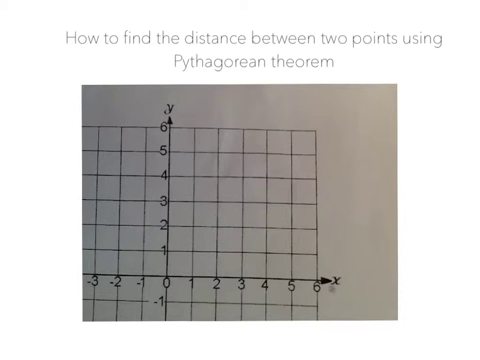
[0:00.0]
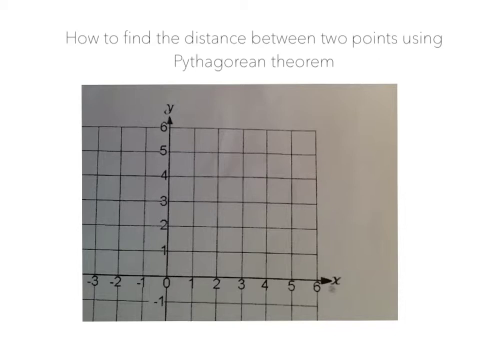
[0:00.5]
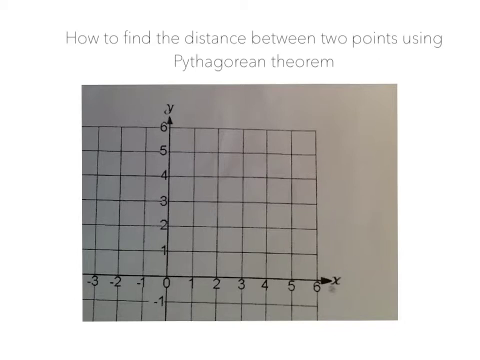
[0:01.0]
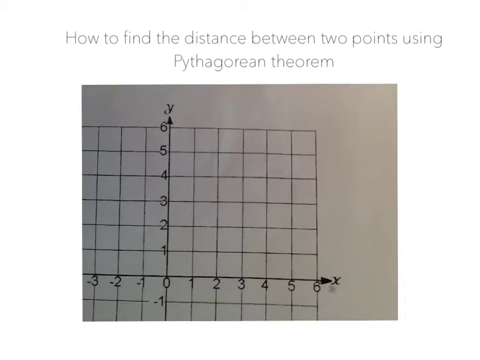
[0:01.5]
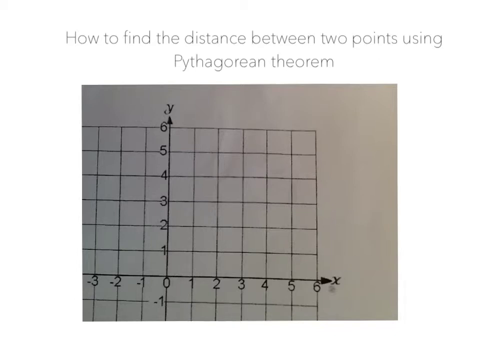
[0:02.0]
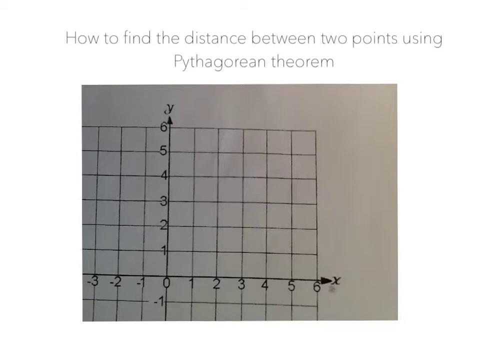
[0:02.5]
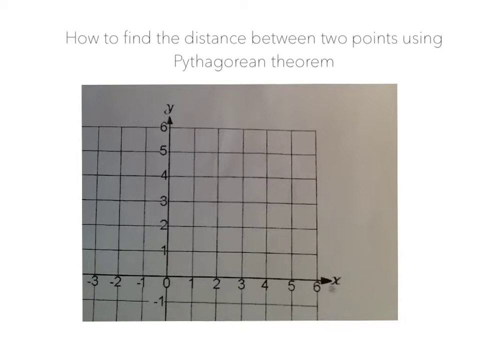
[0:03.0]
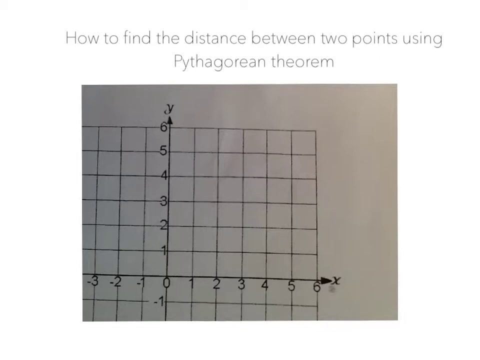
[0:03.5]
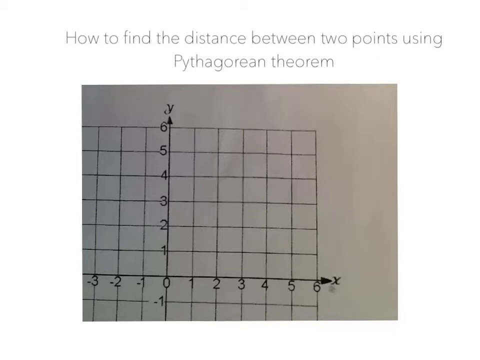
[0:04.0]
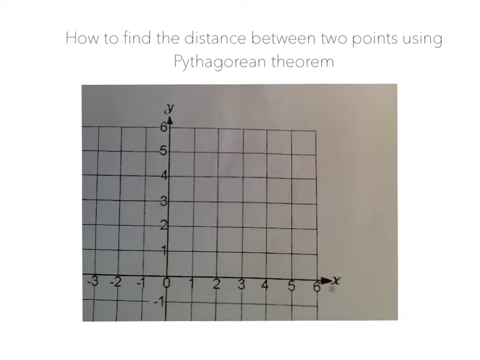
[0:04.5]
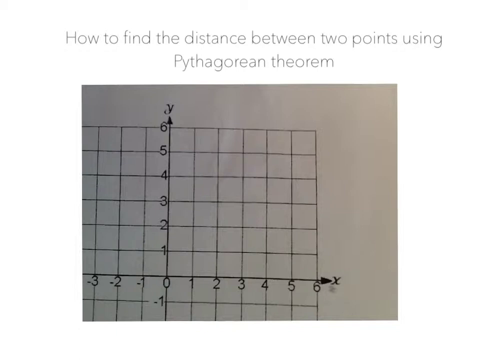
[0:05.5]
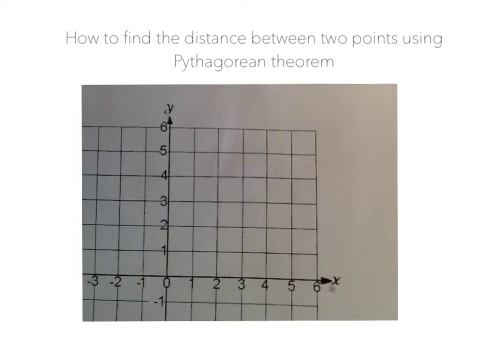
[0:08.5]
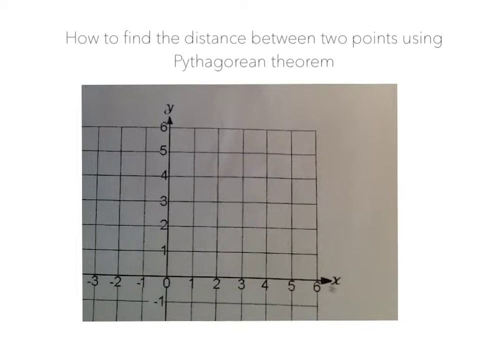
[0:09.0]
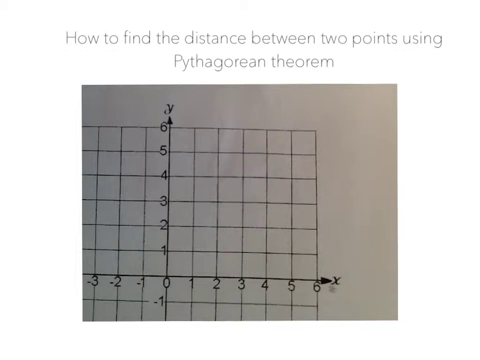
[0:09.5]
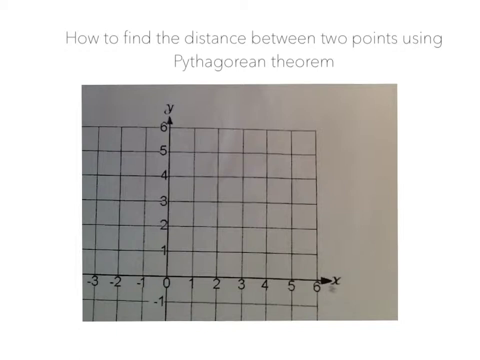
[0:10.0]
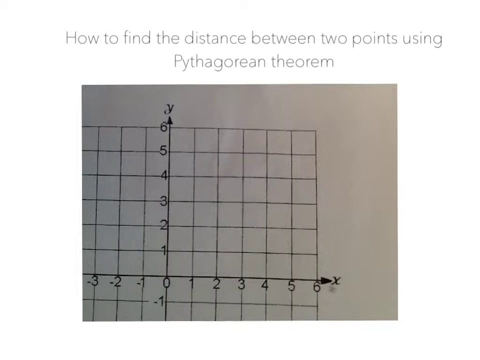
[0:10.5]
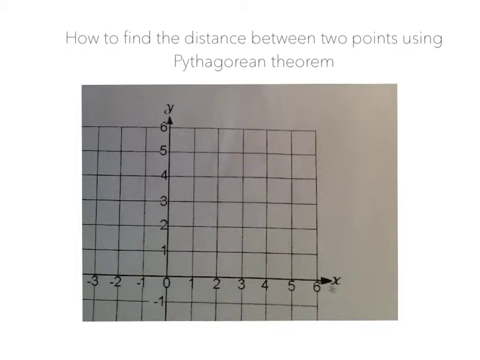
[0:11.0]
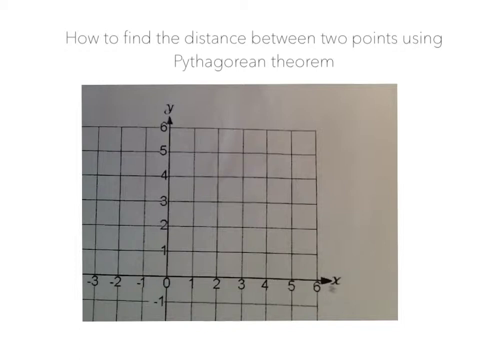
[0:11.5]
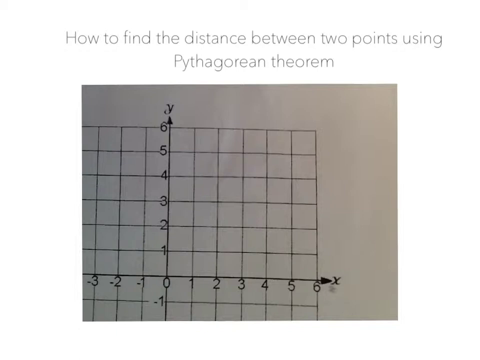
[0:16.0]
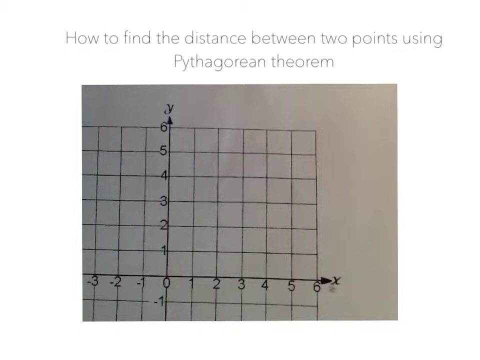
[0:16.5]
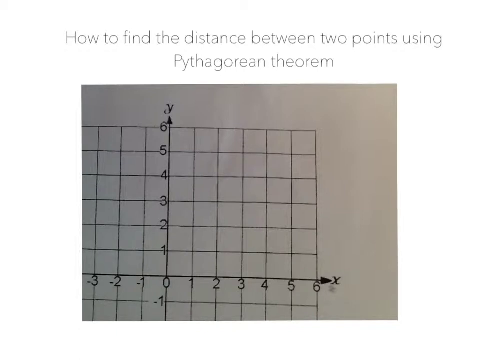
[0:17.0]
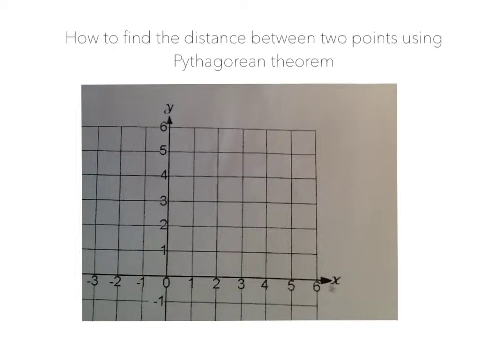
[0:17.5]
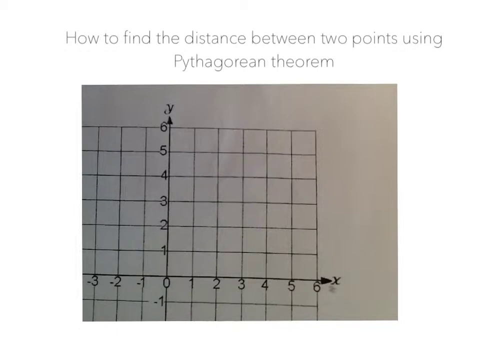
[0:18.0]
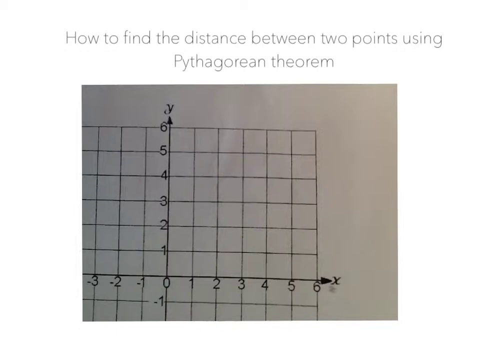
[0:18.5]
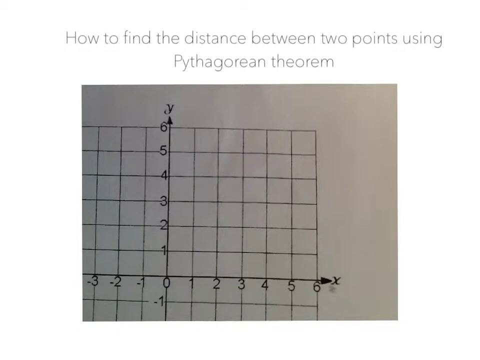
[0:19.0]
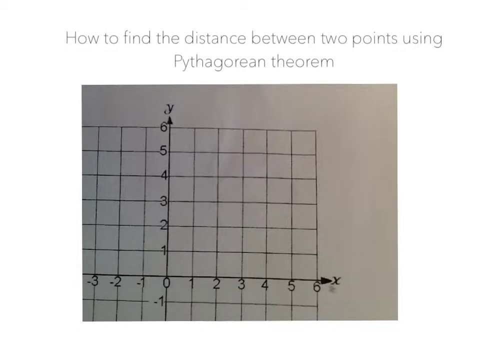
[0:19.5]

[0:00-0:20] A partial shot of a graph on a grid stays on the screen. The grid has ten columns, the first of which is partially obscured because it is cut off by the edge of the screen, and eight rows. An X and a Y axis are on the grid: the Y axis runs along the line separating the fourth and fifth columns, and the X axis runs along the line between the sixth and seventh rows. Numbers mark the line of each row and column. On the y-axis they go from 6 at the very top down to 0 where the axes intersect, with -1 and -2 below that. The x-axis starts at -3 on the left, goes to 0 at the intersection, and then proceeds from 1 to 6. Right above the graph are two lines of faded, almost very light gray text. The first line says "How to find the distance between two points using" and the second says "Pythagorean theorem".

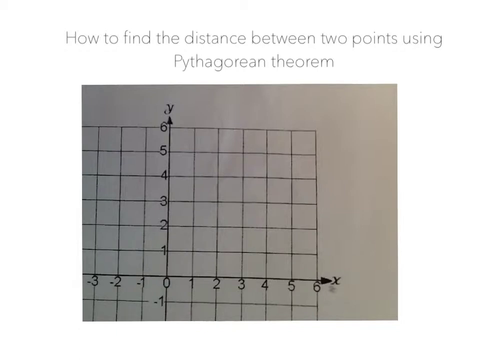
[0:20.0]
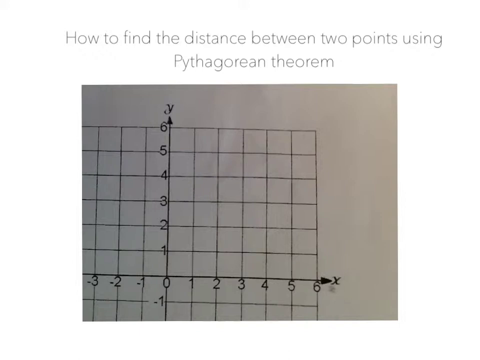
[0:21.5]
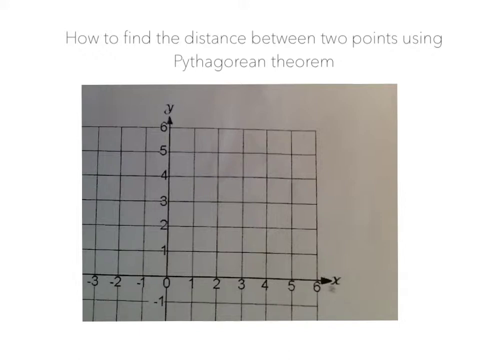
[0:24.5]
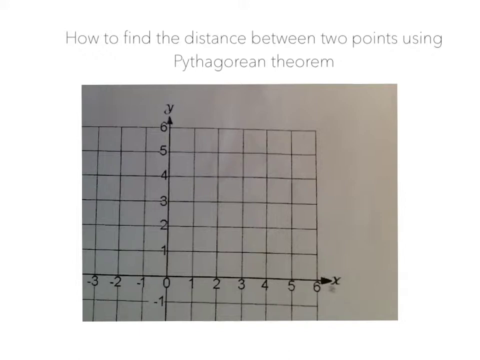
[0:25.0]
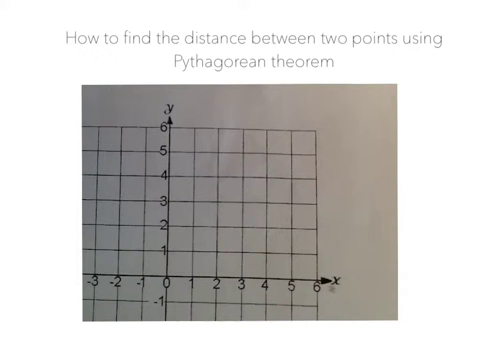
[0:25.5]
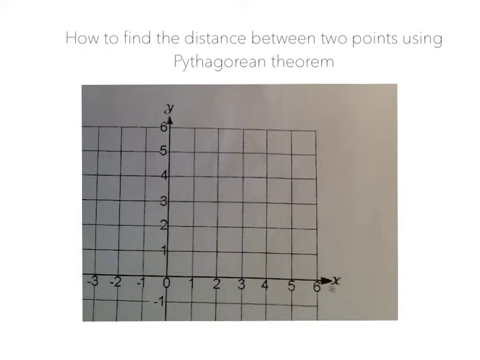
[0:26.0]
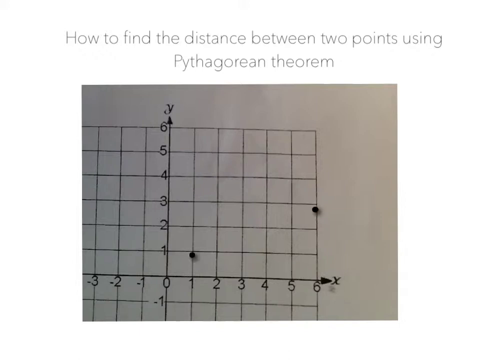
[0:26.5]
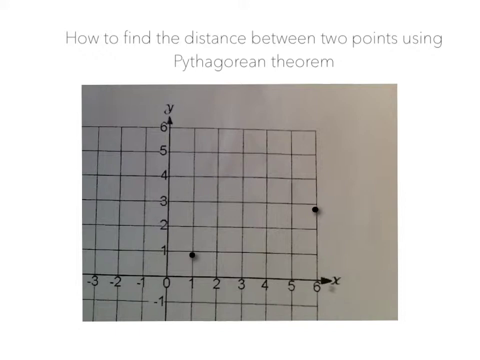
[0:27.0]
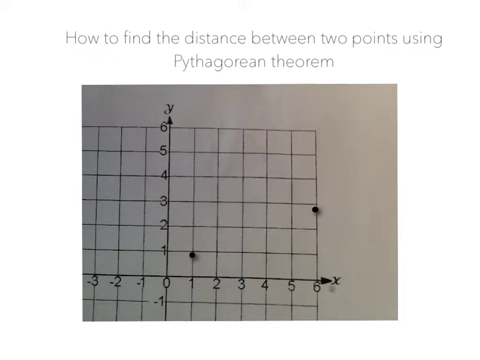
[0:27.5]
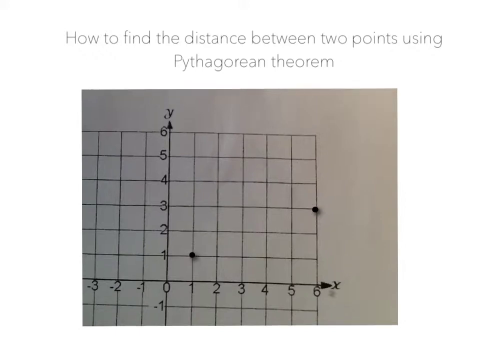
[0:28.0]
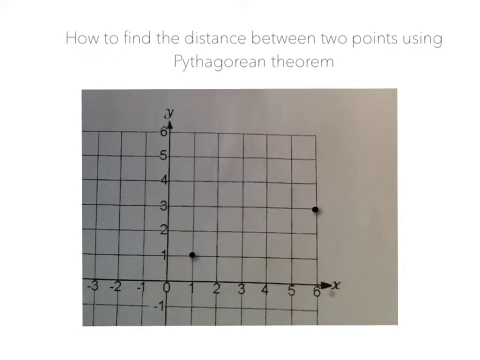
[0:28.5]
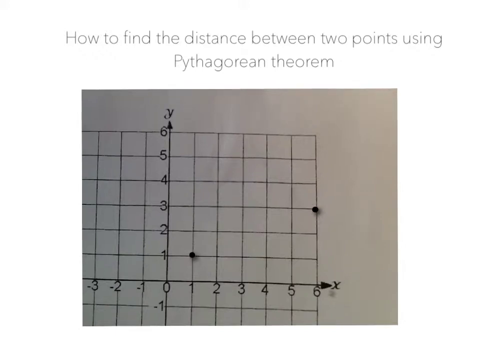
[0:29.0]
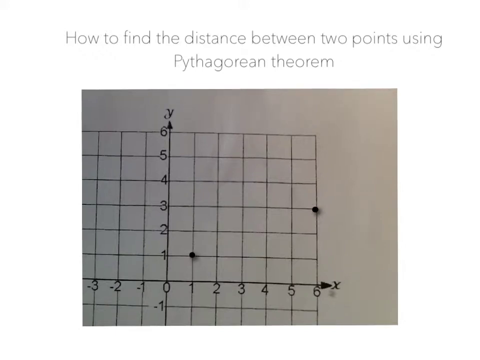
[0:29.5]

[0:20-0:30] A still, partial shot of a graph on a grid is shown. The grid has ten columns, the first partially obscured, and eight rows. The Y axis runs along the line separating the fourth and fifth columns, and the X axis runs along the line between the sixth and seventh rows. Numbers mark the line of each row and column: the y-axis goes from 6 at the very top to 0 at the intersection, with -1 and -2 below, and the x-axis starts at -3 on the left, goes to 0 at the intersection, and proceeds from 1 to 6. Above the graph are two lines of light gray text: "How to find the distance between two points using" and "Pythagorean theorem". After a few seconds the screen suddenly blips and two dots appear on the graph. The first is right below the line of the 1 on the Y axis and on the line of the 1 on the X axis. The second is right underneath the 3 on the Y axis and on the line of the 6 on the X axis. After a few seconds the image seems to shift upwards, and the dots move up so they are directly on the top corner of the box they were in.